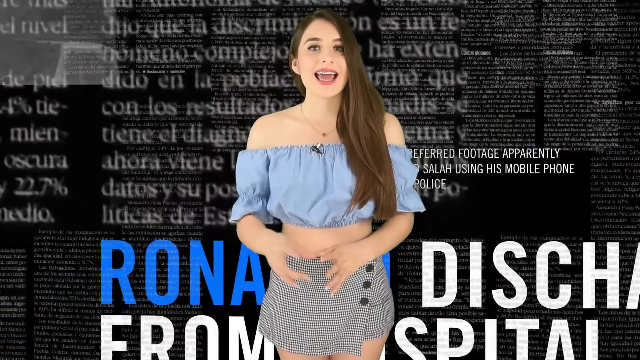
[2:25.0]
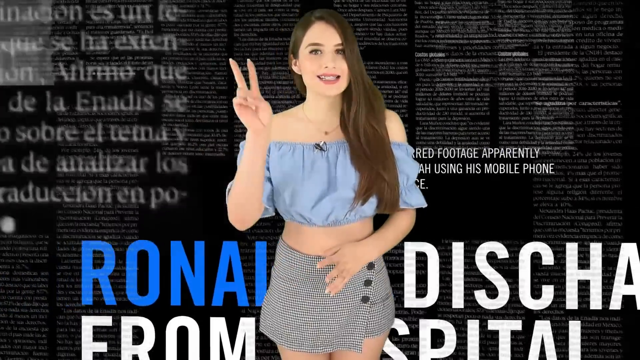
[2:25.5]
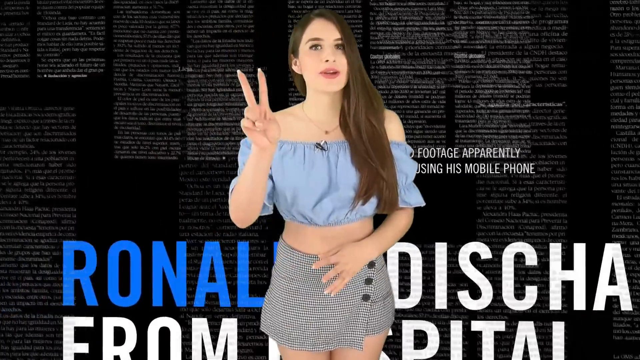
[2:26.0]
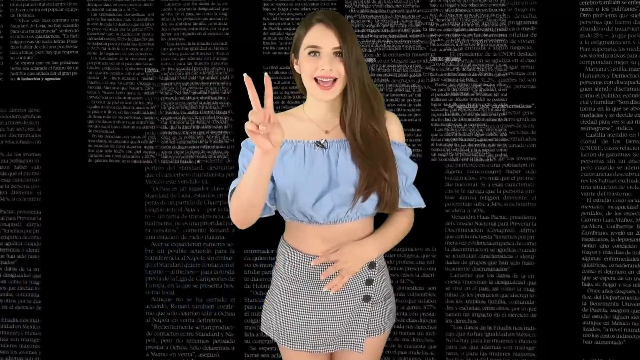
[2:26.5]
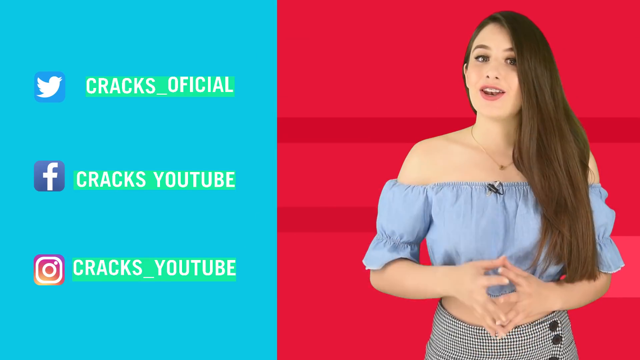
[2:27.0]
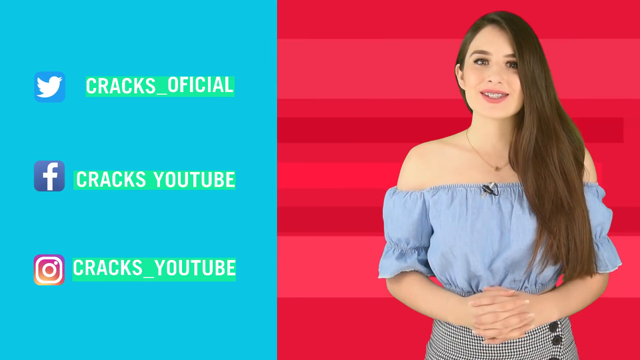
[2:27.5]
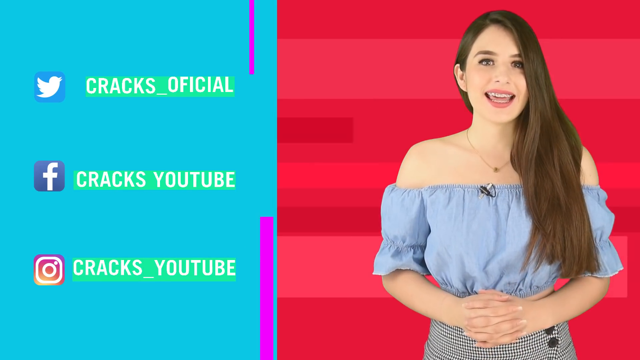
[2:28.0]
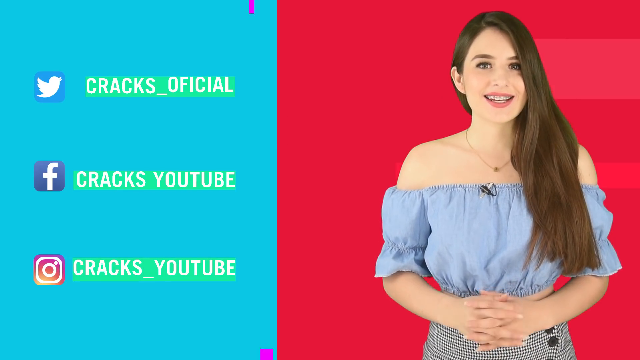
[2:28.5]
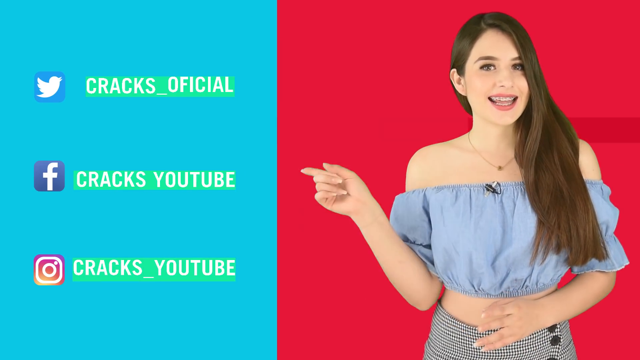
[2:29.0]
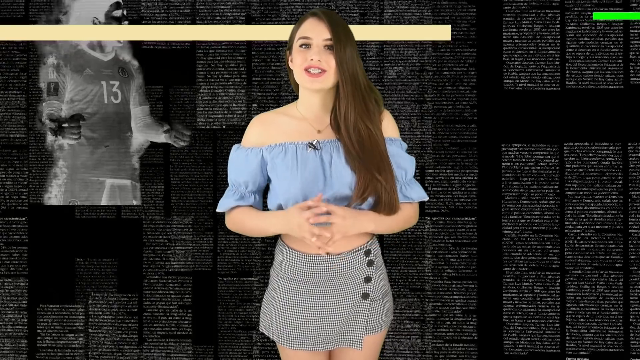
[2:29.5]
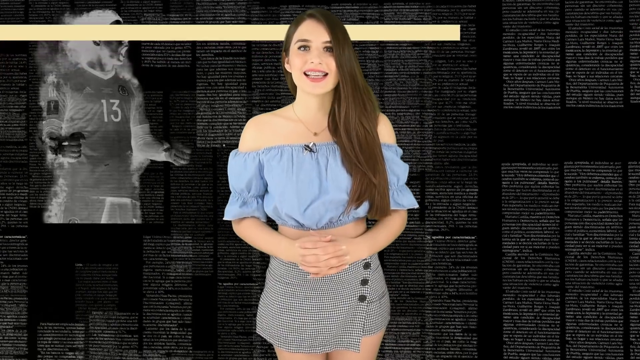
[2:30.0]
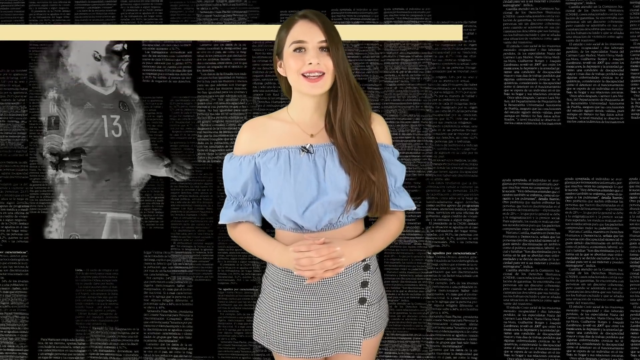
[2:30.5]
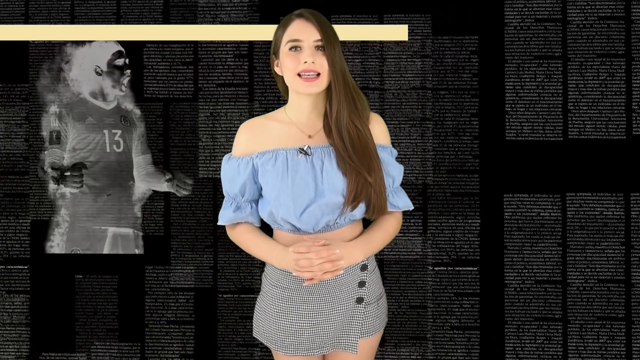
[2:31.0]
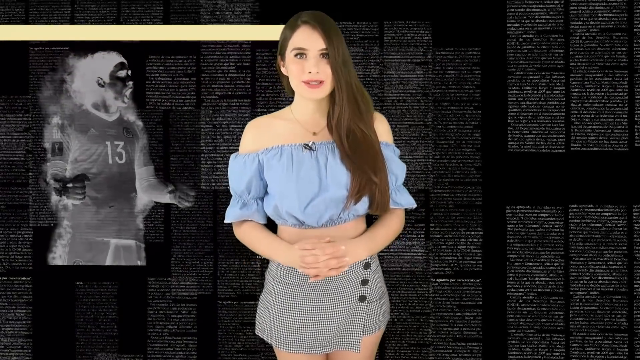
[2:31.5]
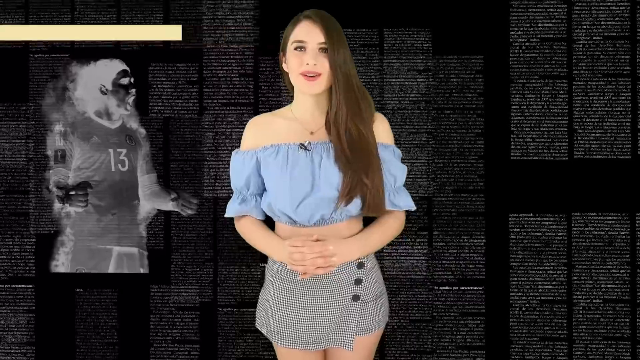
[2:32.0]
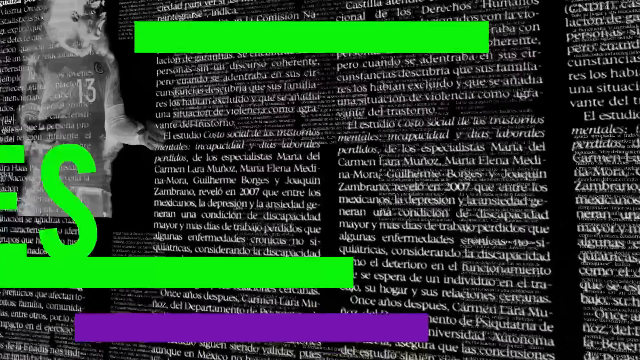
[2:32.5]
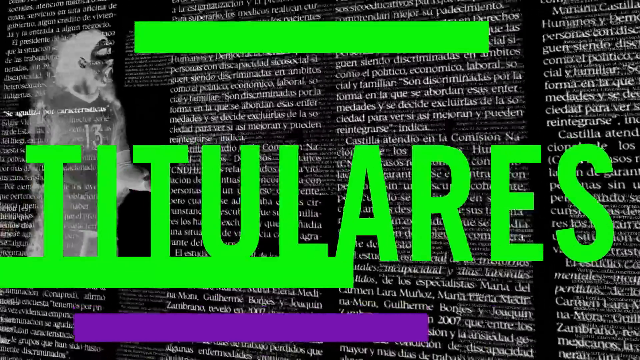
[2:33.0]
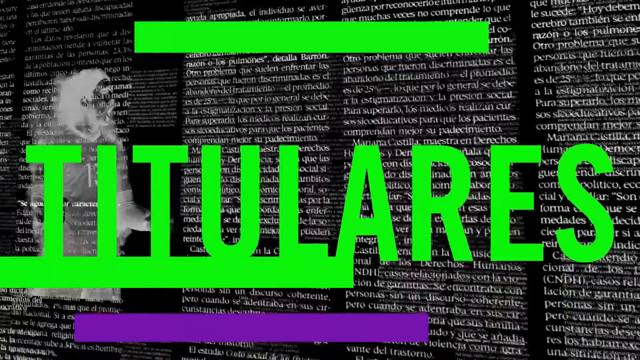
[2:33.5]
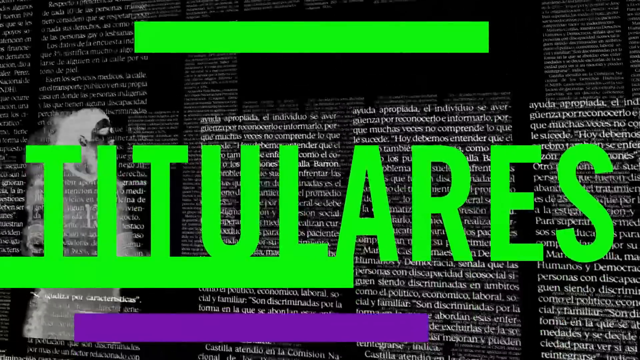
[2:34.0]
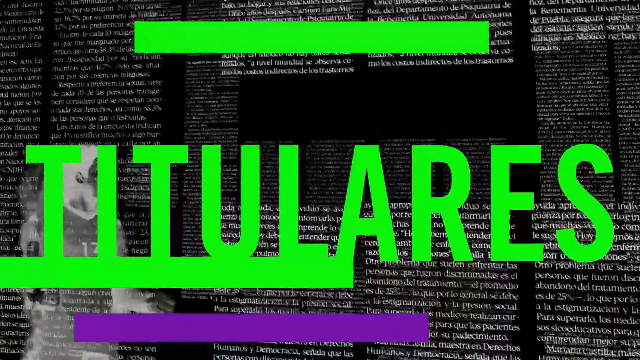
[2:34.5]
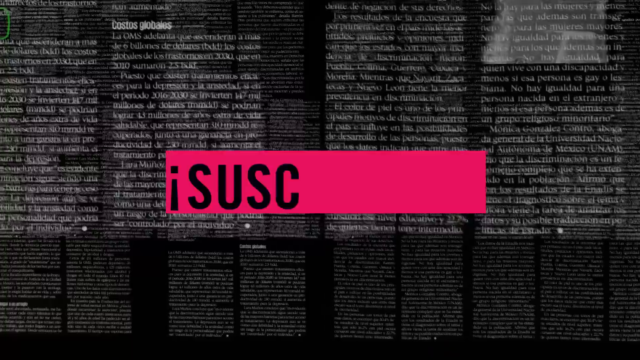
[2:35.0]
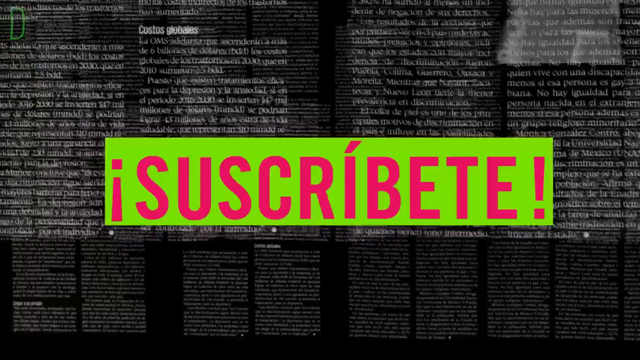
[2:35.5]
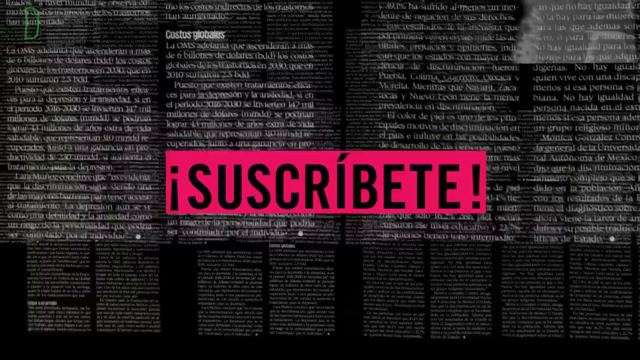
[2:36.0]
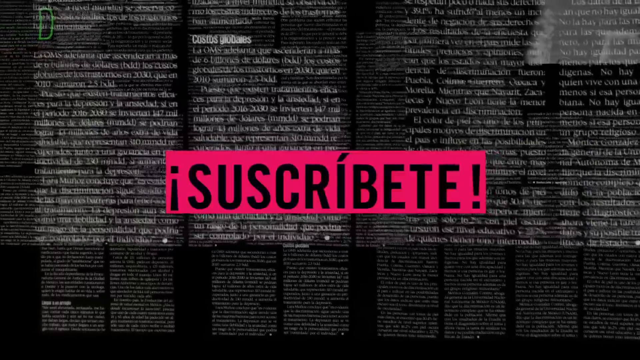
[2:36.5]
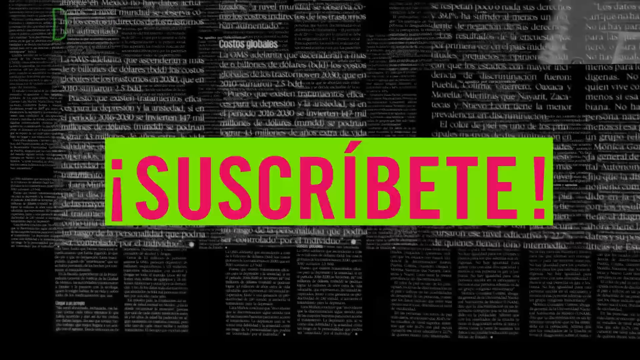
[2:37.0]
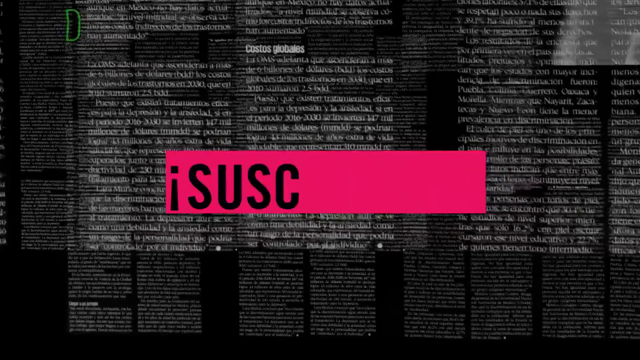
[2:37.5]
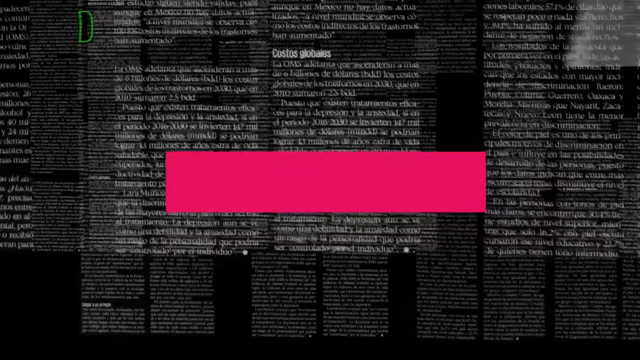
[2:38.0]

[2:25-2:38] The woman in the blue kind of tube top holds two fingers up, as if showing the number two. Some text pops up behind her, and she is shown with a red background. On the viewer's left is a Twitter emblem with "Cracks Official"; below that a Facebook image with "Cracks YouTube"; and below that what is apparently an Insta logo, also with "Cracks YouTube". She points to this with her right hand. Then, in a sort of superimposed negative, like a black-and-white picture negative, a player with the number 13 is shown behind her, and words meaning subscribe pop up, apparently in Spanish.